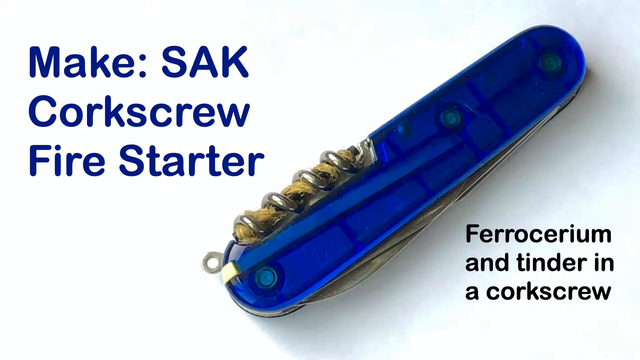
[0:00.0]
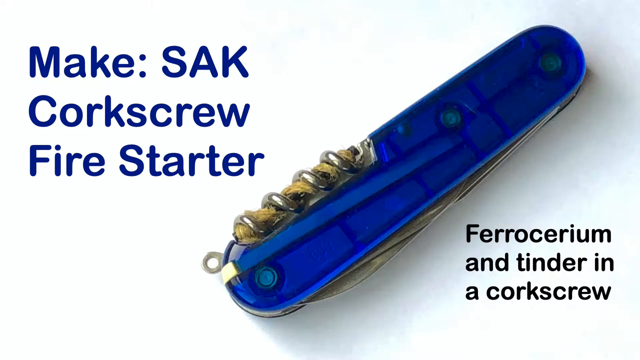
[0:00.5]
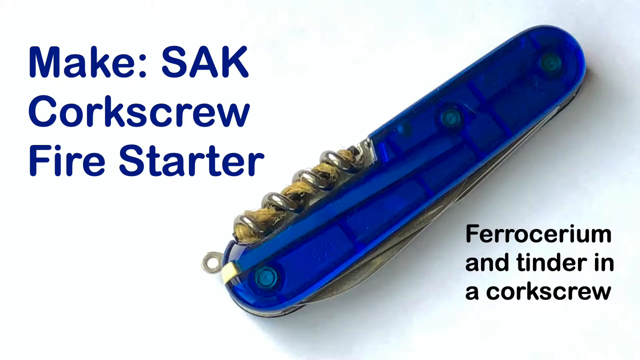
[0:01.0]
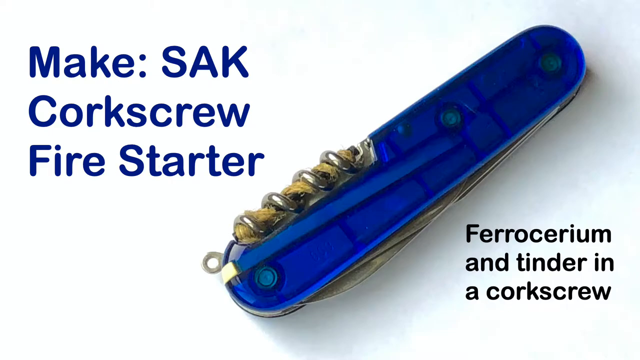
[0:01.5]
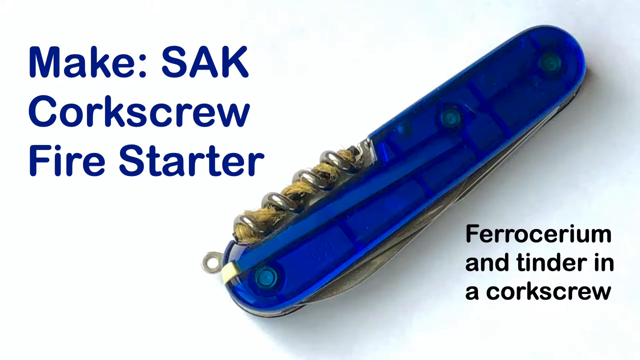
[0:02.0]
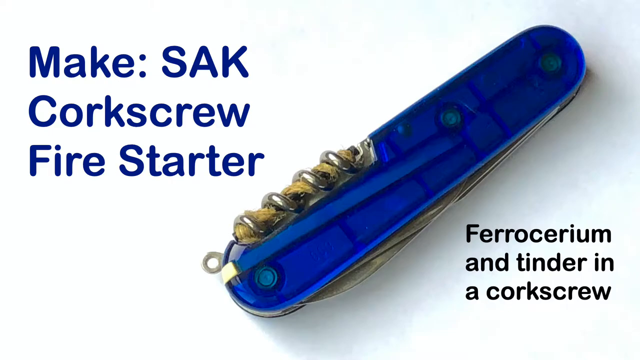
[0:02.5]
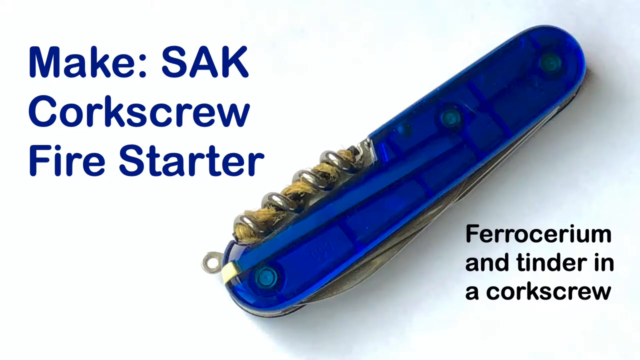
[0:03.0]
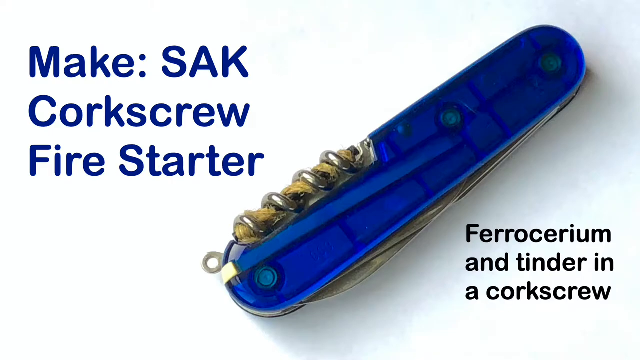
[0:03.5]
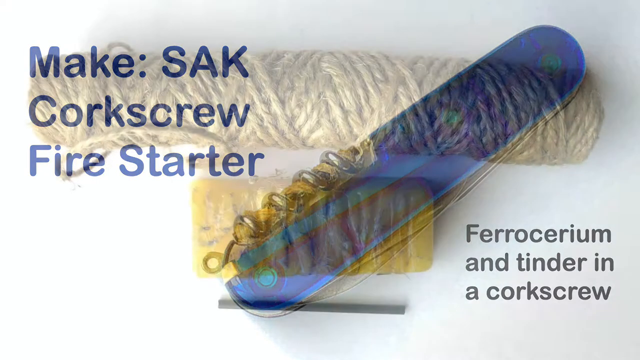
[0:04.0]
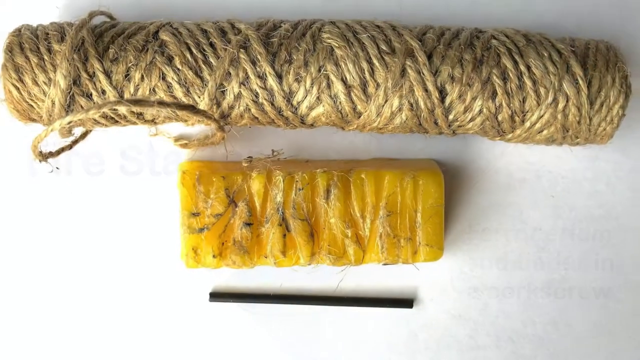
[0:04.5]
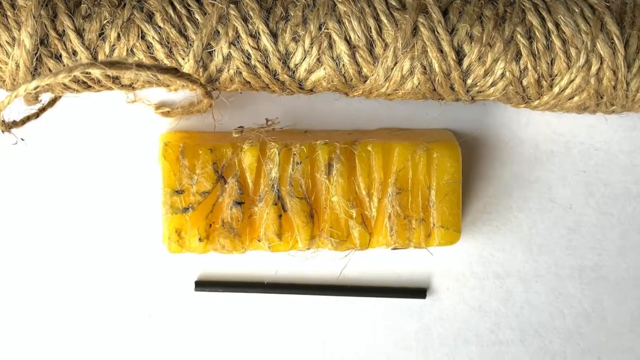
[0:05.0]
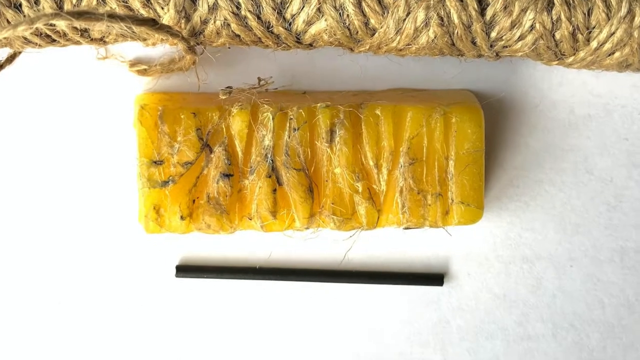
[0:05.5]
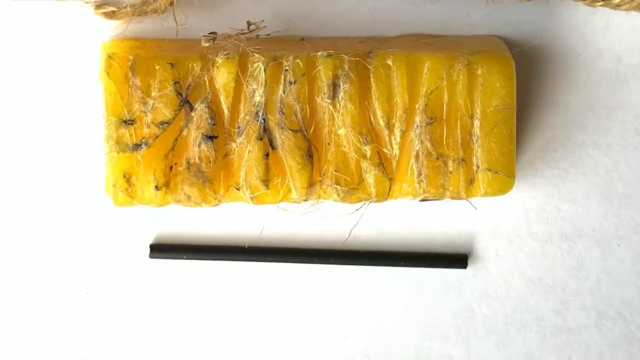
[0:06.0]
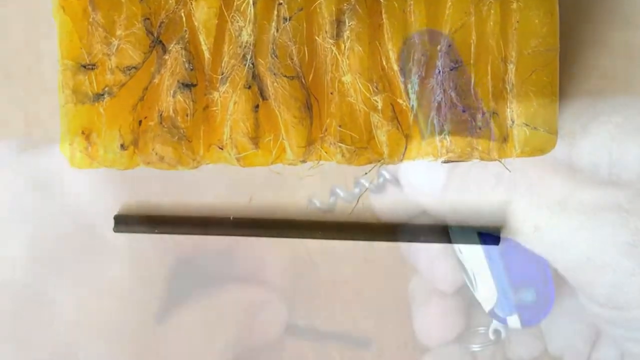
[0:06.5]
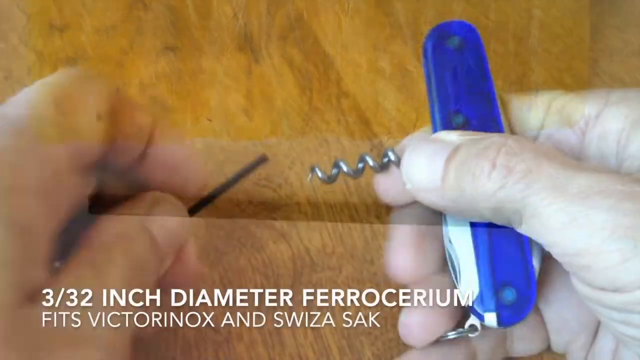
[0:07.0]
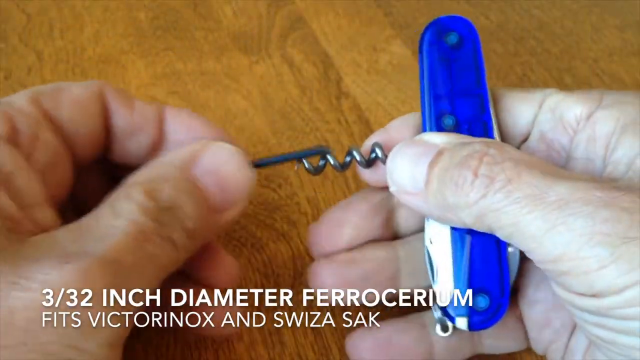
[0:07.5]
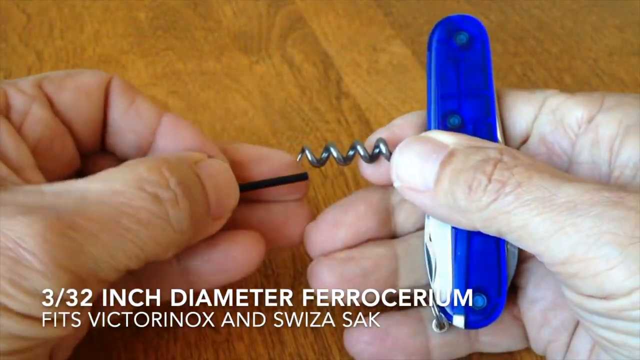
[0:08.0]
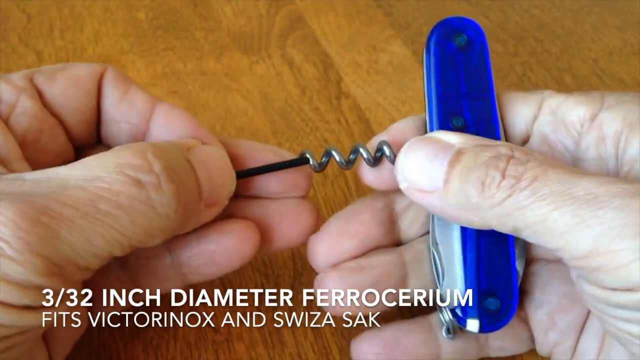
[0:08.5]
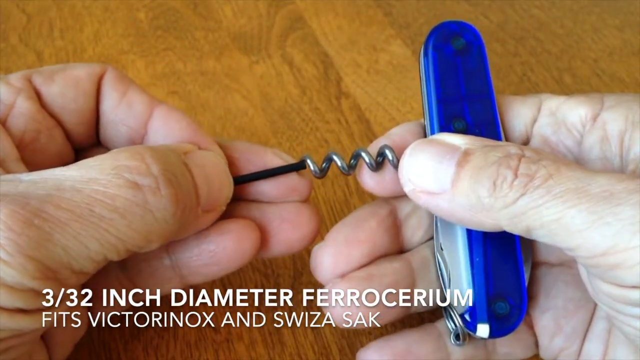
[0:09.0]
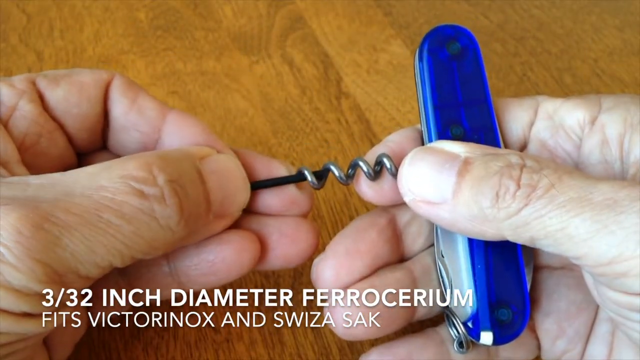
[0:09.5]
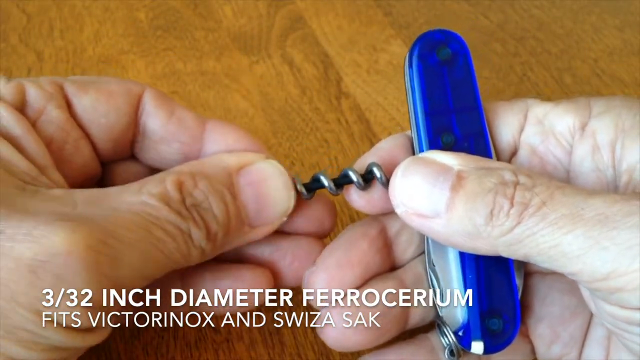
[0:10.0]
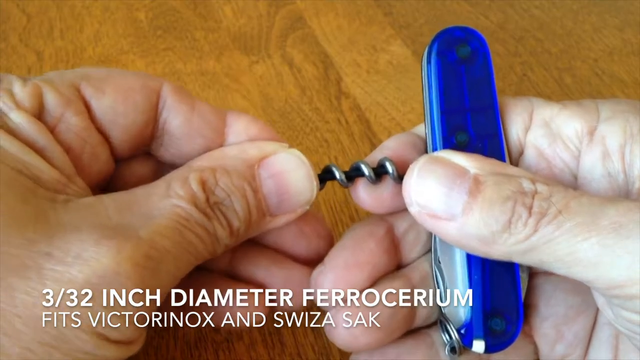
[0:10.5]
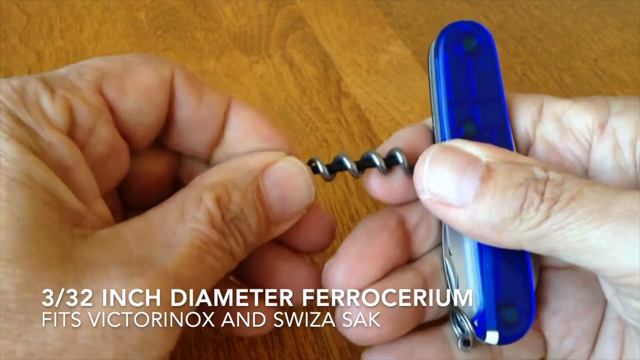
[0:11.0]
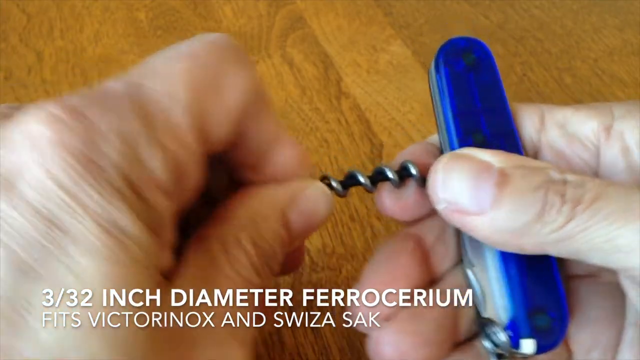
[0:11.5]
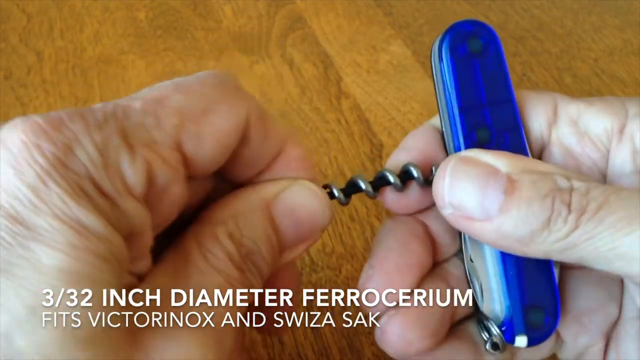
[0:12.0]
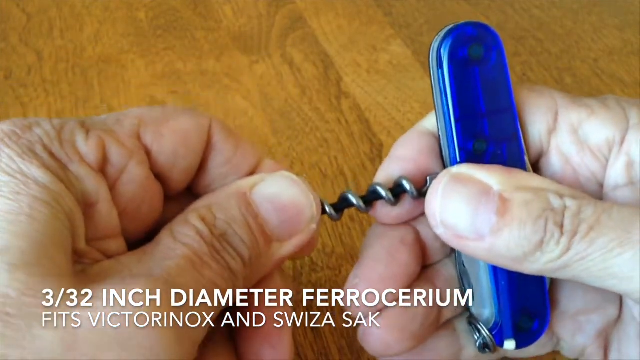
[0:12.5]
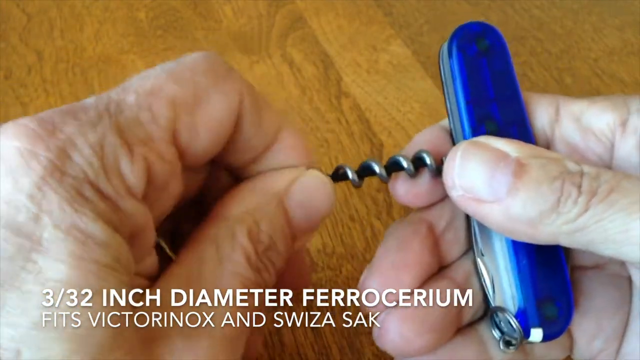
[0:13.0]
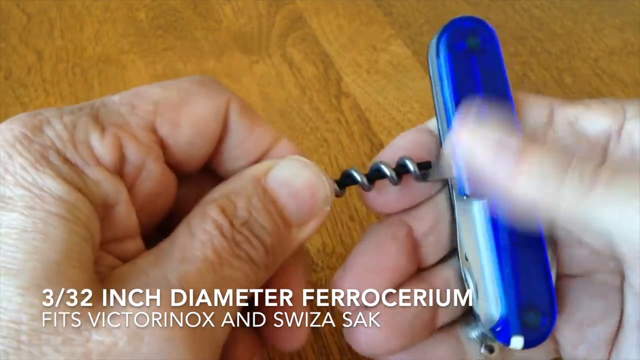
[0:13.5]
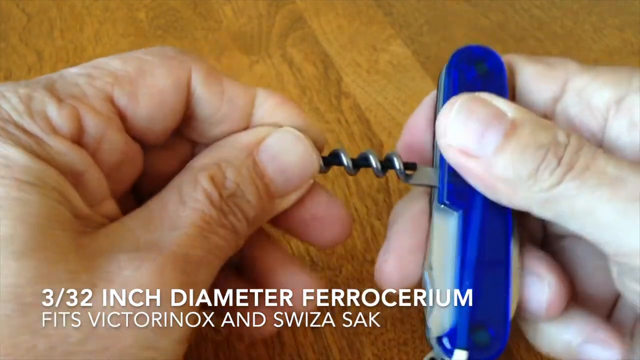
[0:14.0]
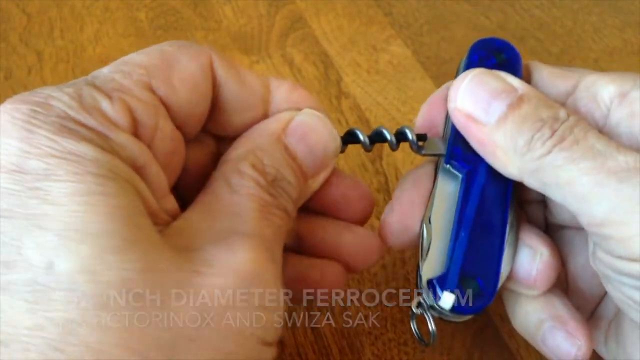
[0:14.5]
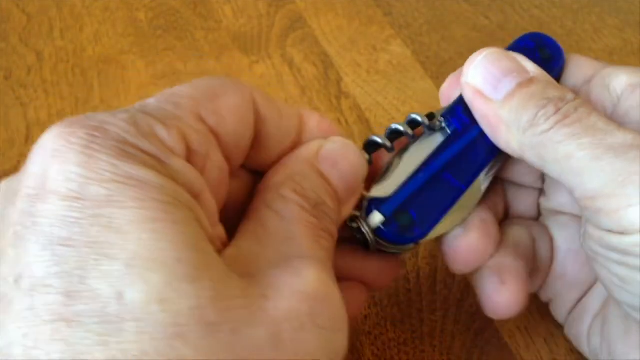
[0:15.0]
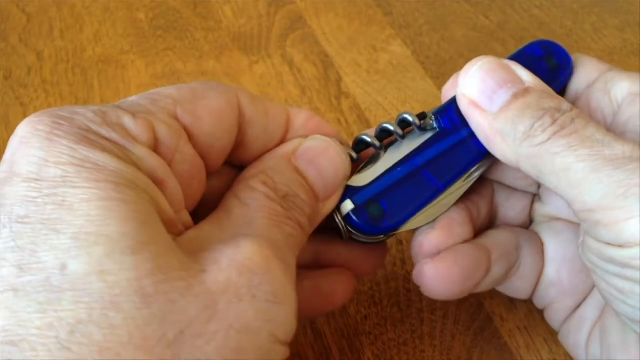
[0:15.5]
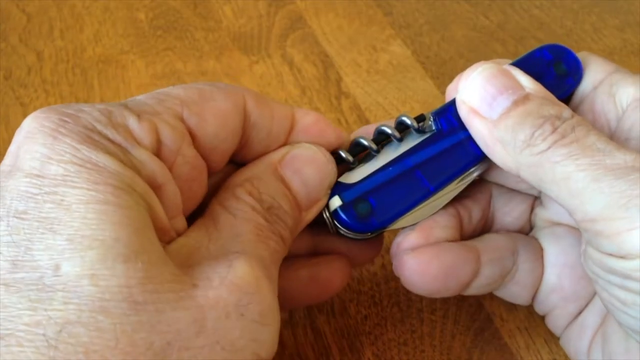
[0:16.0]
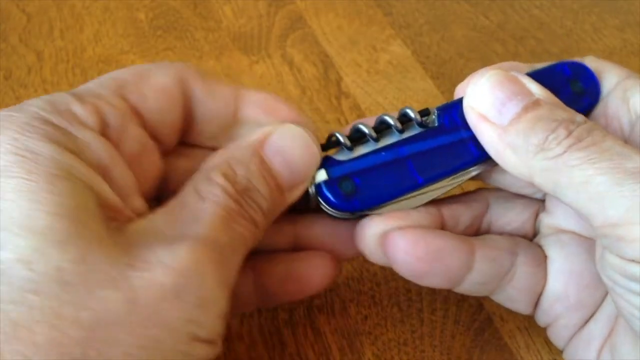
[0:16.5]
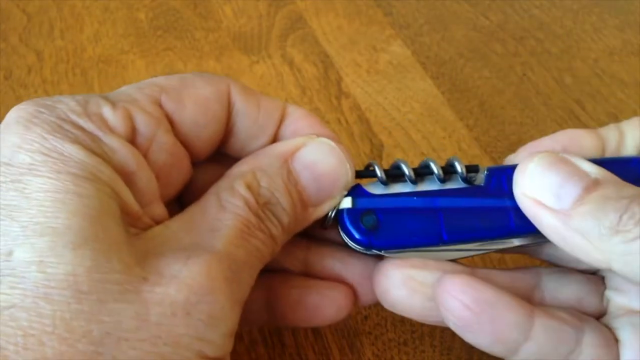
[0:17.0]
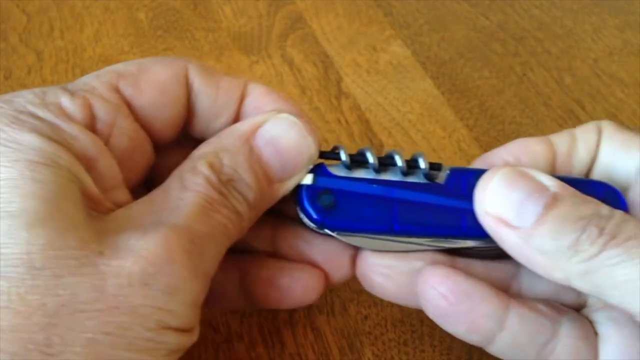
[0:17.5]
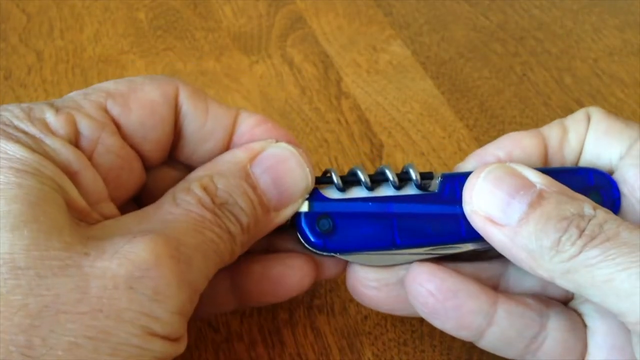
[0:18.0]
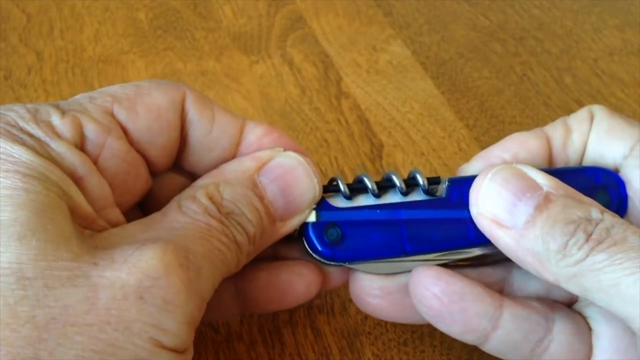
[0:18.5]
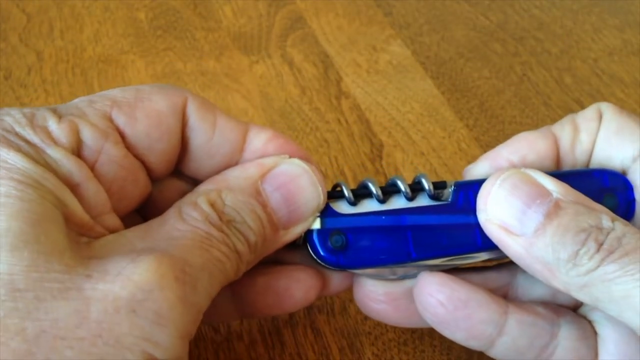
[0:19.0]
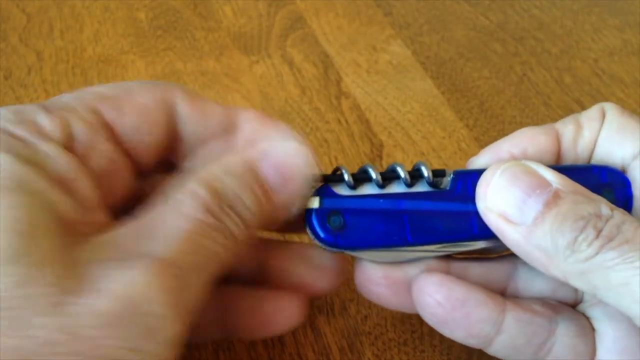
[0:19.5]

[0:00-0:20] The main subject is a blue corkscrew fire starter, SAK, an accessory made of ferrocerium and tinder in a corkscrew, shown first on a white background. Next, three layers of the element are visible: a worsted piece, a glue piece and something that looks like plastic. The view zooms in on this element, which is not plastic but a 3/32 inch diameter ferrocerium for Viktor Nox and Swiza SAK. Then what appears to be an old man puts the ferrocerium part into the element and closes everything up.